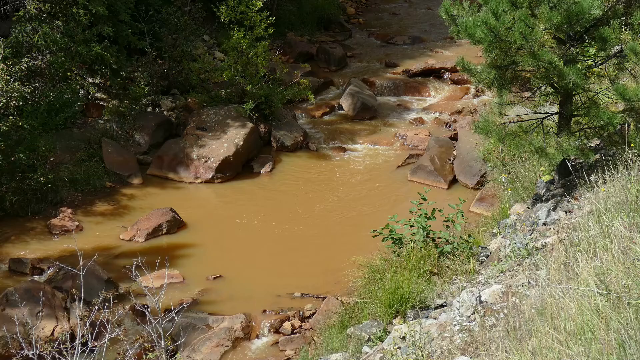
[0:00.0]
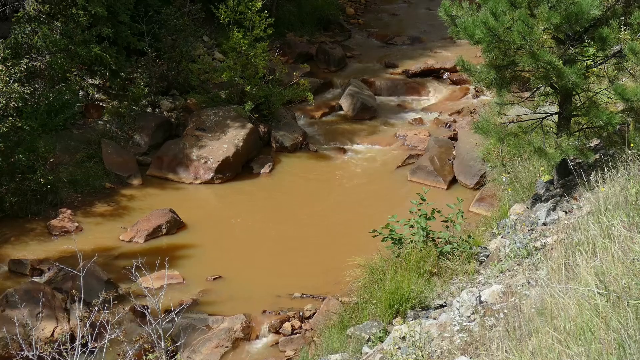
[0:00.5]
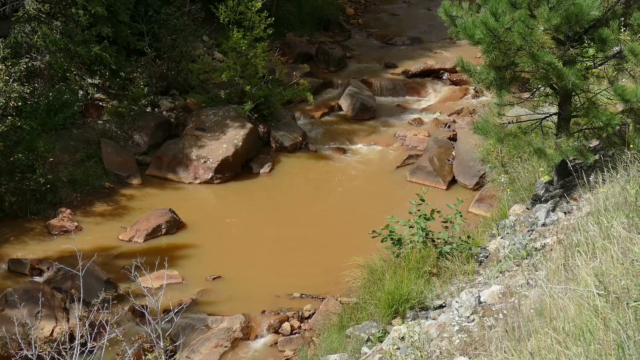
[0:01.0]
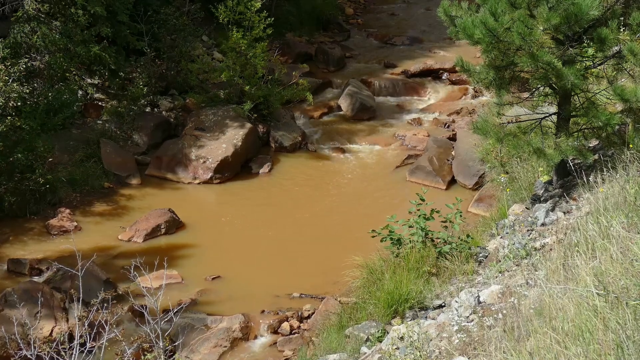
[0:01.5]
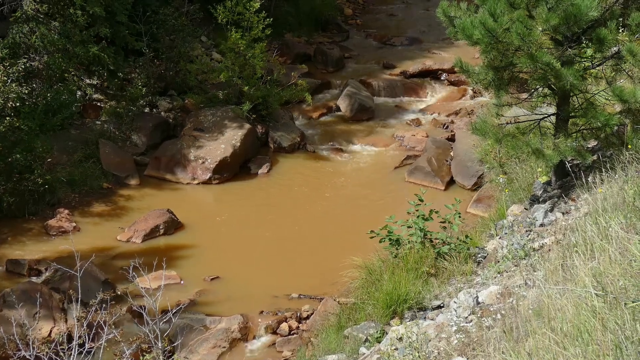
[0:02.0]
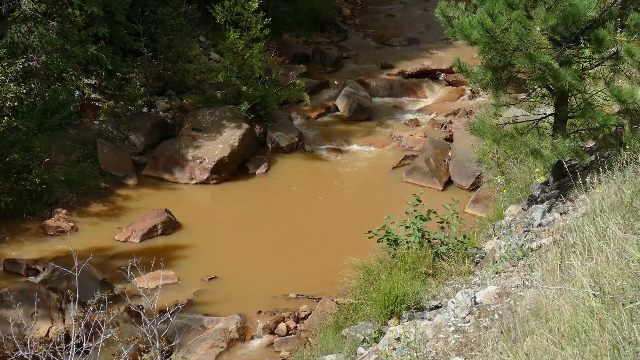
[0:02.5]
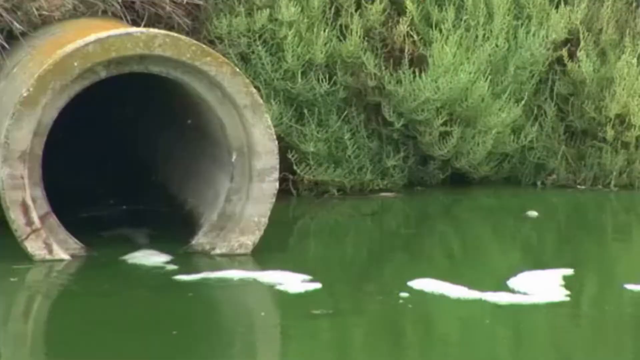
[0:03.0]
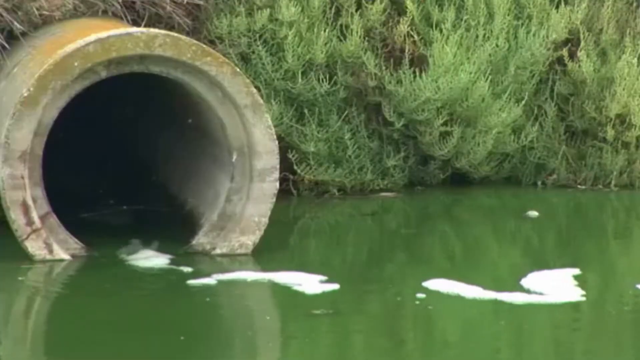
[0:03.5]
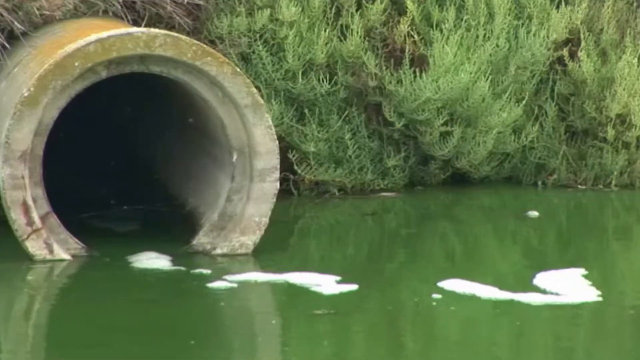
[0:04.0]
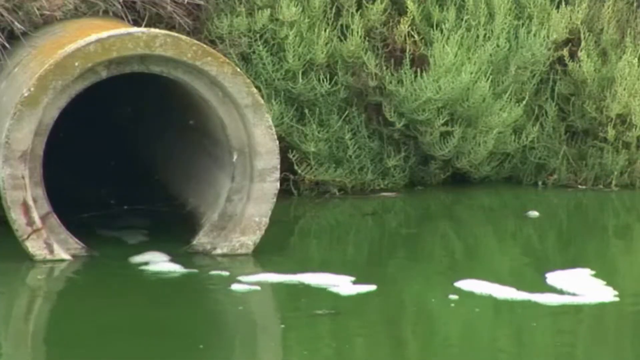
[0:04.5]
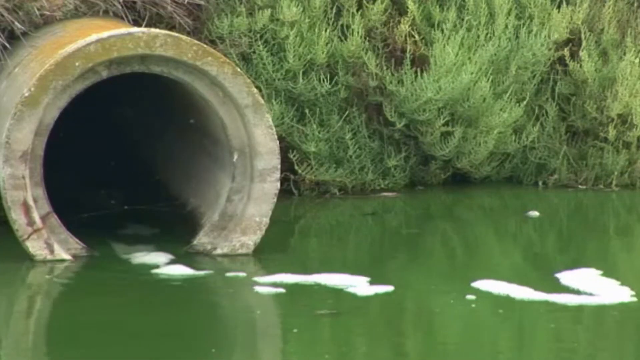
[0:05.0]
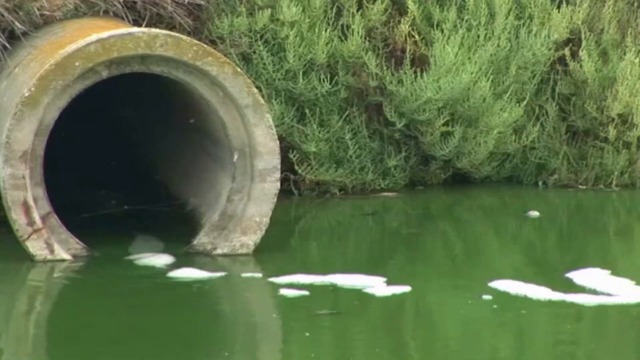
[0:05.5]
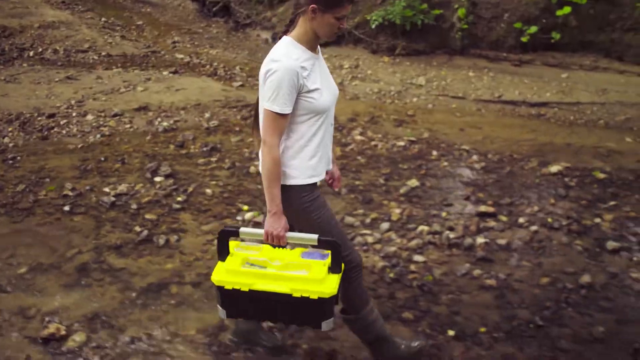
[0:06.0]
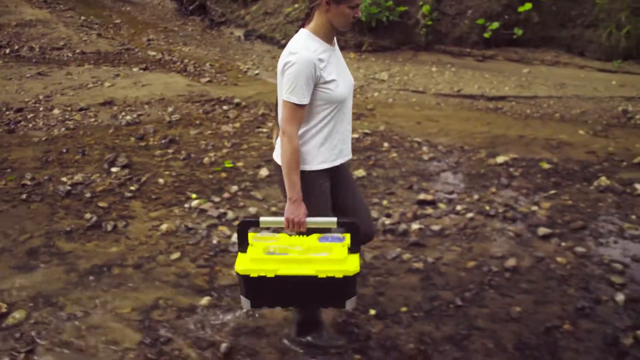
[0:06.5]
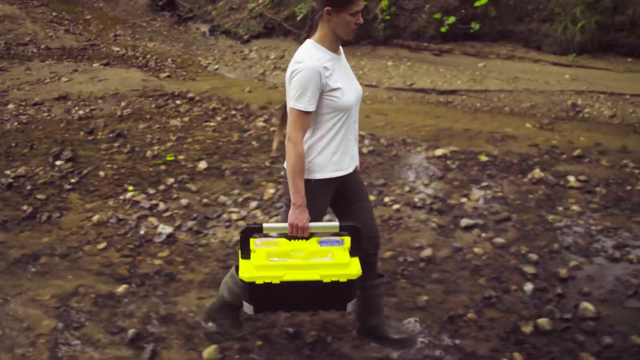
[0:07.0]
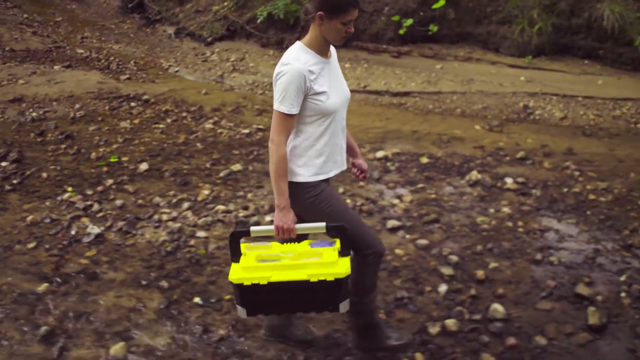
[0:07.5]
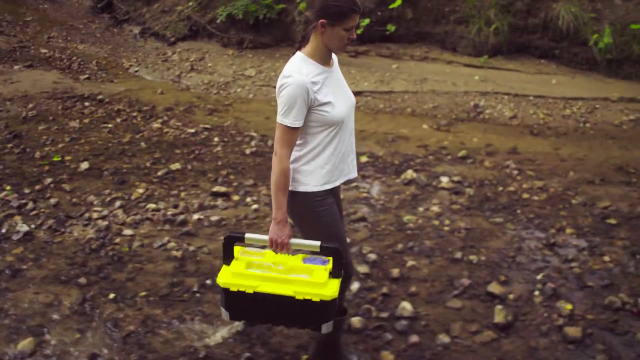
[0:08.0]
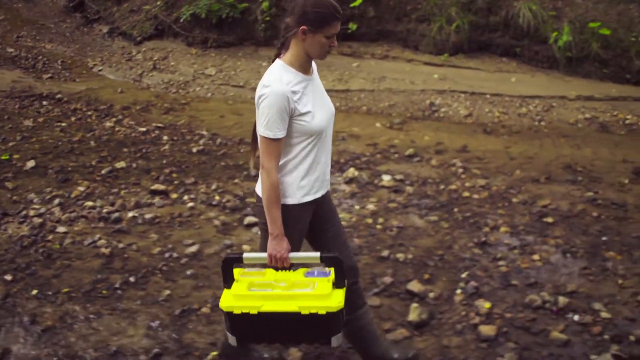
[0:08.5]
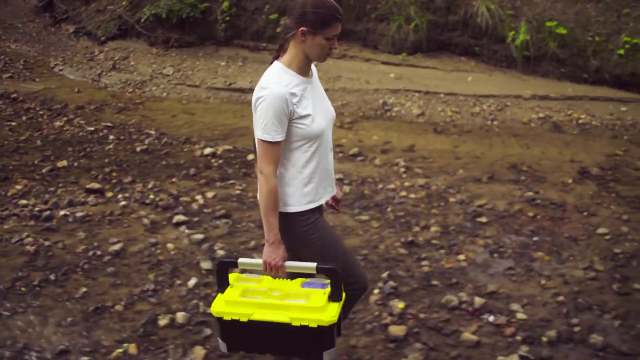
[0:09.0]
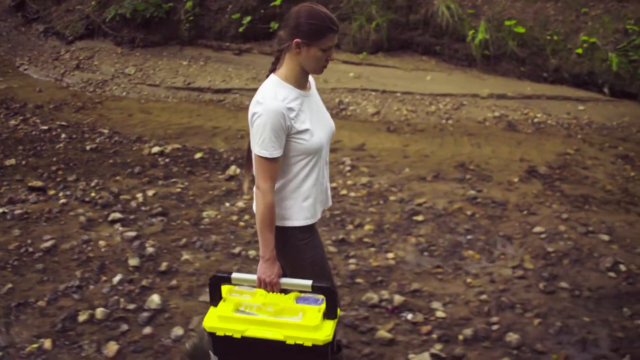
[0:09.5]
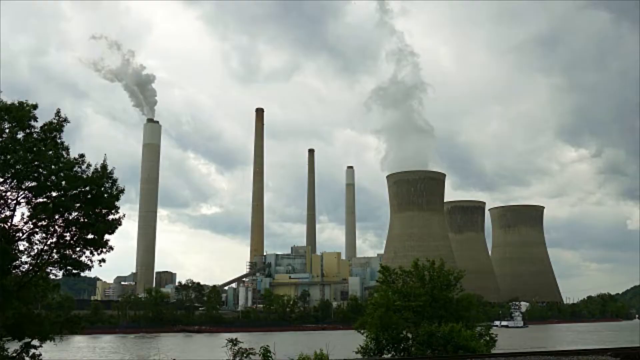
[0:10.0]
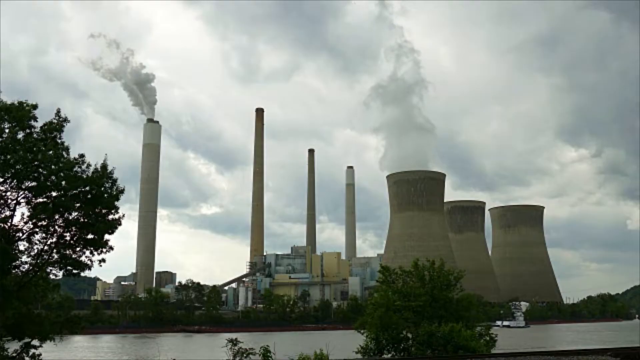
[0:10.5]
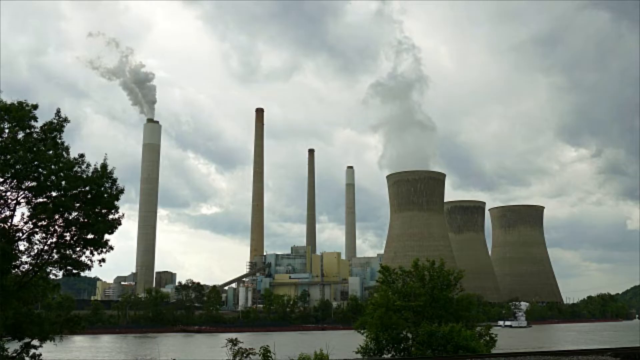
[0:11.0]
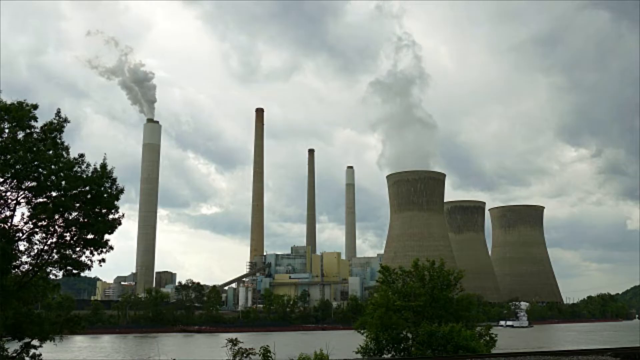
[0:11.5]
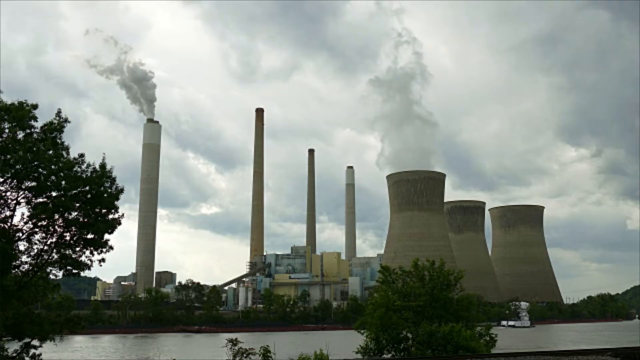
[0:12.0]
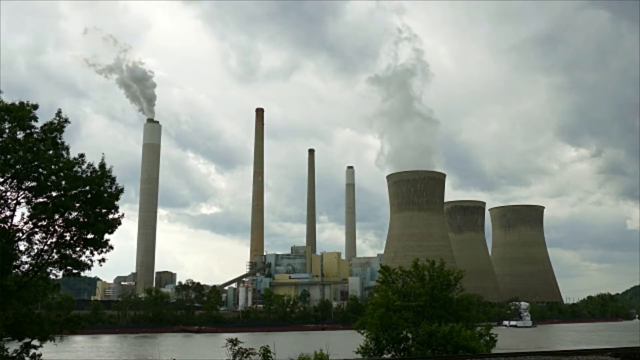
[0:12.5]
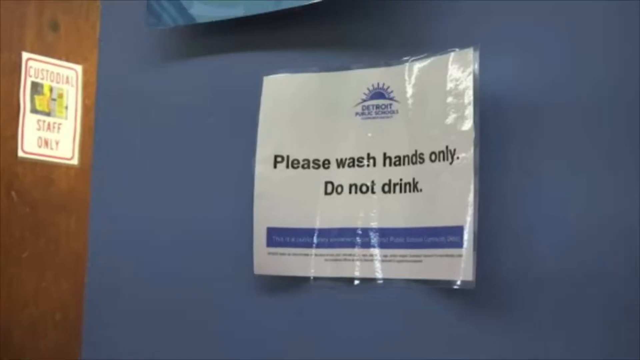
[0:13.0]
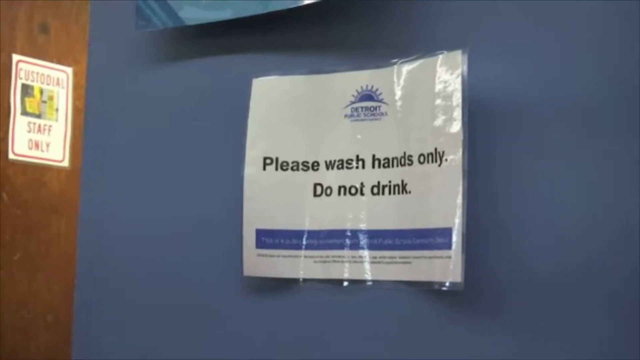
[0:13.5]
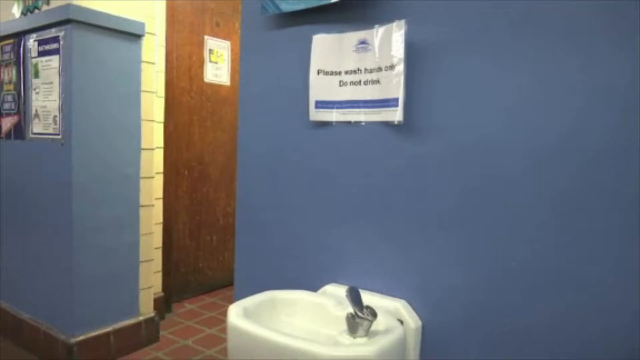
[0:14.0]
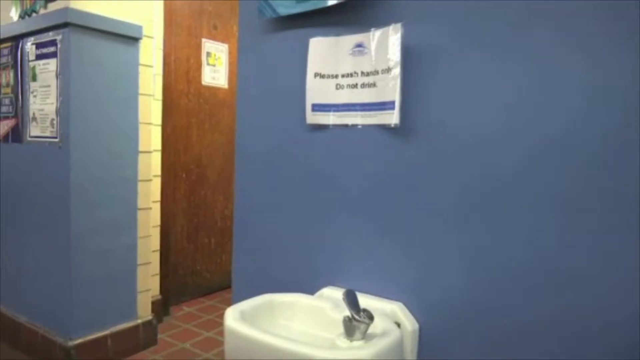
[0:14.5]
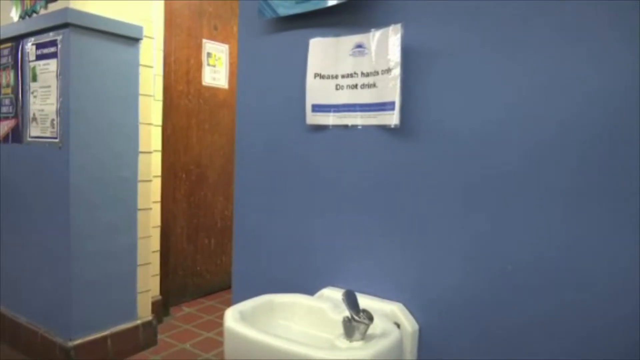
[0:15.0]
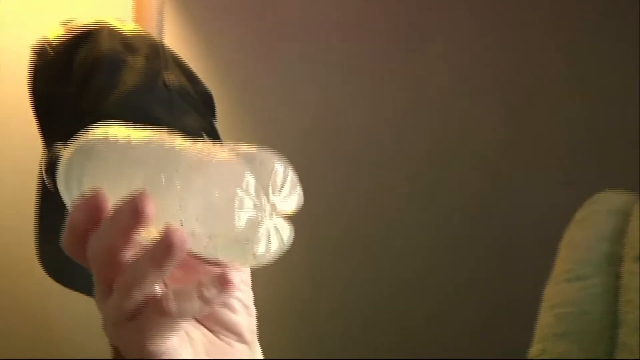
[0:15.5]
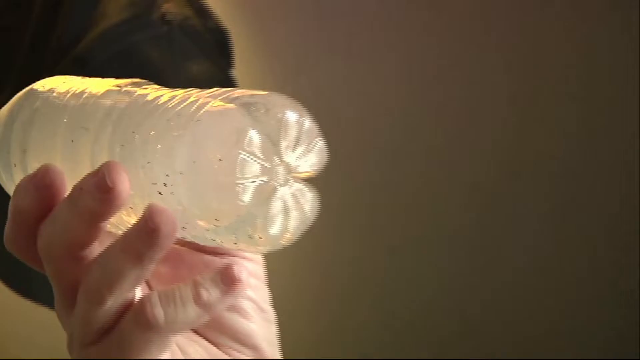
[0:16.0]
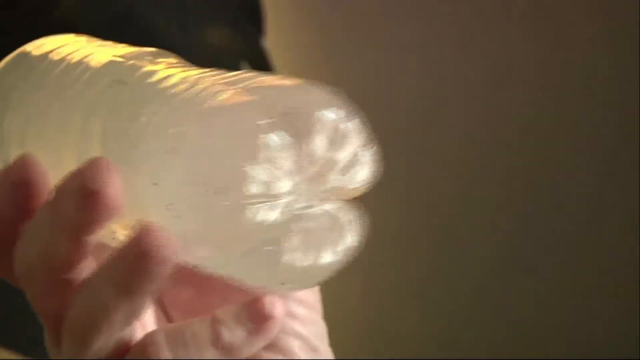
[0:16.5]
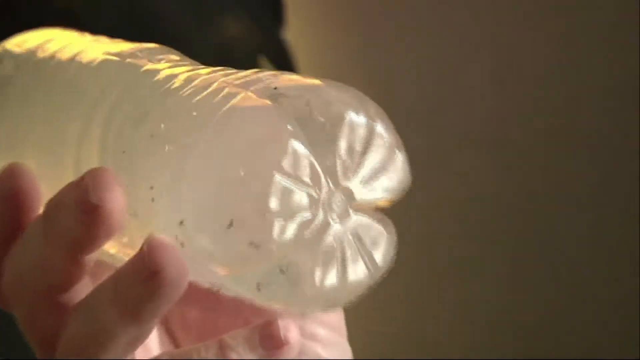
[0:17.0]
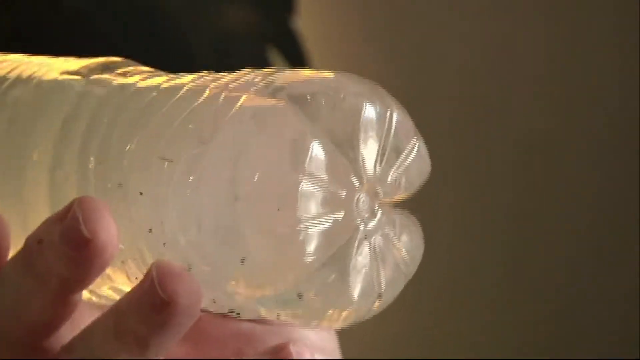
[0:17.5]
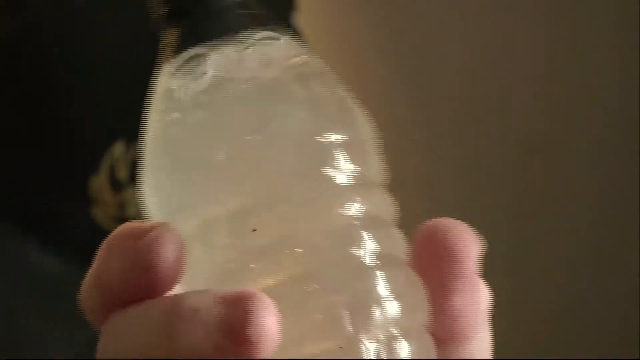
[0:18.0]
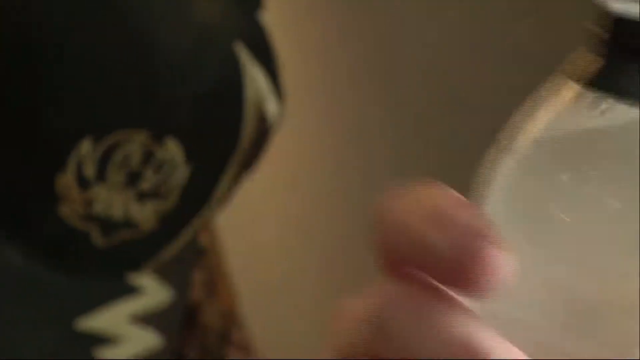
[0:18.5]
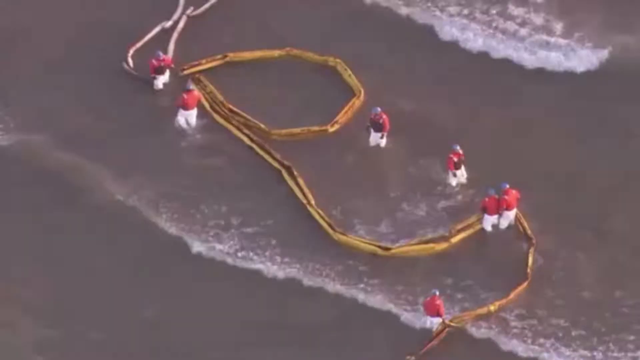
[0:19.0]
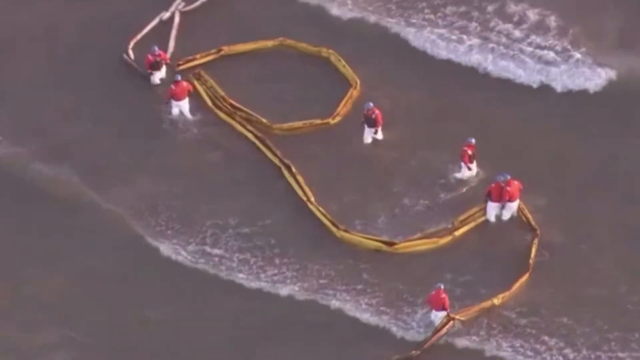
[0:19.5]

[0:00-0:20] The video begins with a view of what looks like a creek, shot from the point of view of a hillside. The water looks very brown, and rocks are visible in it. Then a large concrete tube appears with white foam coming out of it and going out into the water, which looks green. Next, a woman wears a white shirt, brown pants and rain boots. In her right hand she carries what looks like a tote, apparently a cooler or a toolbox, with a black and white handle and a top that is a neon green color. Then comes a picture or video of what looks like a nuclear power plant, with three really thick smokestacks, followed by four cylindrical smokestacks in the background. Next is what looks like a water fountain, with a laminated paper above it on a blue wall that reads "please wash hands only, do not drink." A person then holds up a water bottle; the water inside is very murky, with black dots swimming around in it. Then many workers are on a shoreline with a long, snake-like yellow structure.